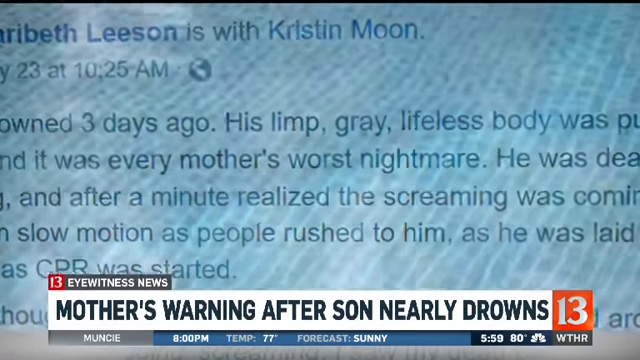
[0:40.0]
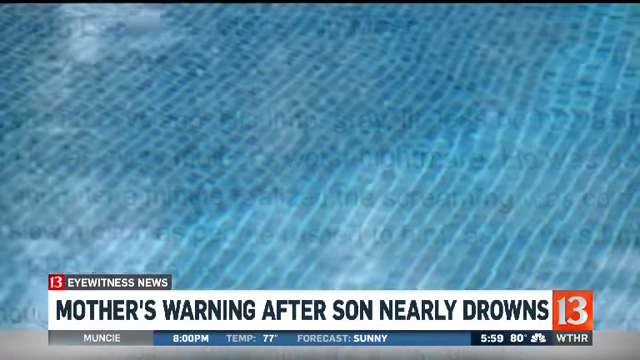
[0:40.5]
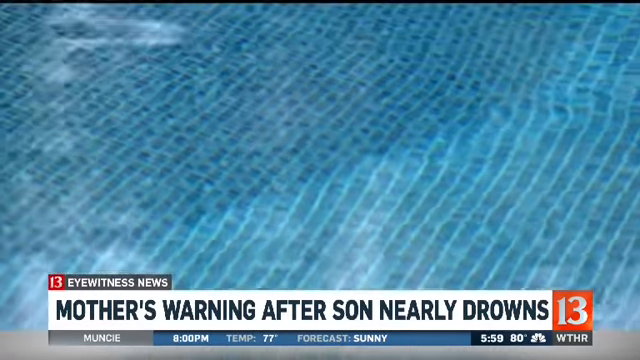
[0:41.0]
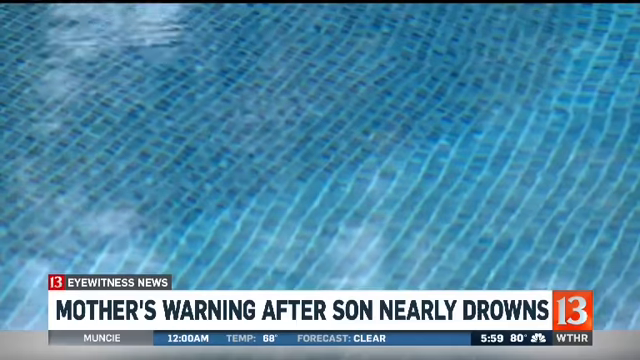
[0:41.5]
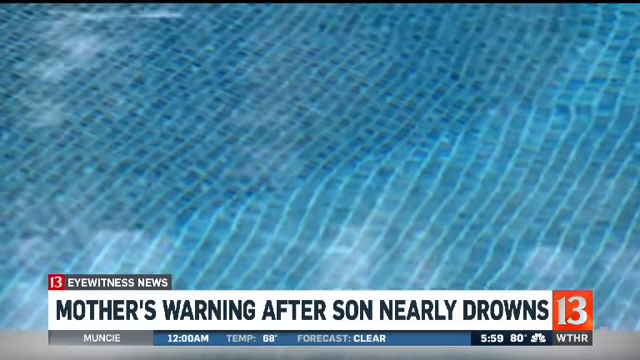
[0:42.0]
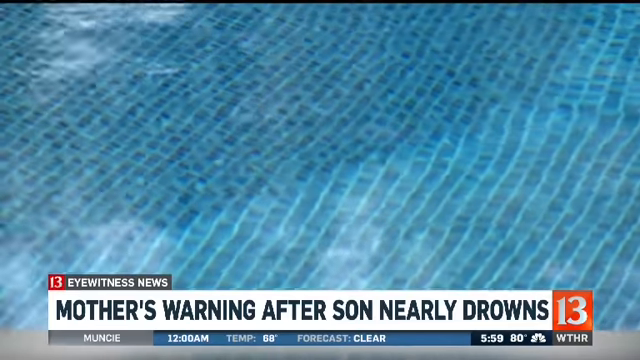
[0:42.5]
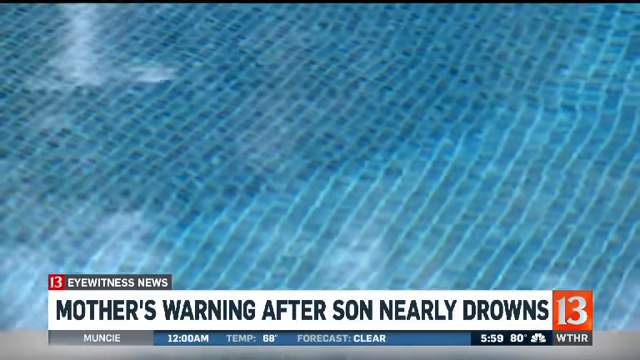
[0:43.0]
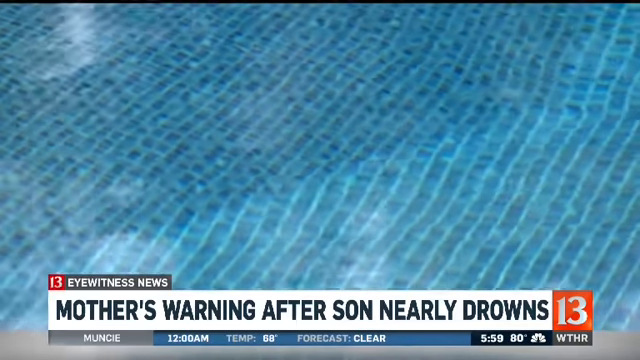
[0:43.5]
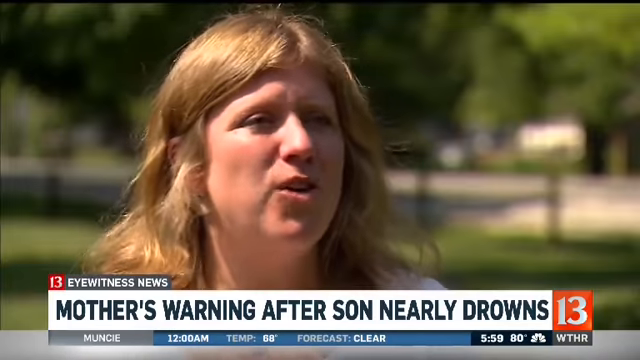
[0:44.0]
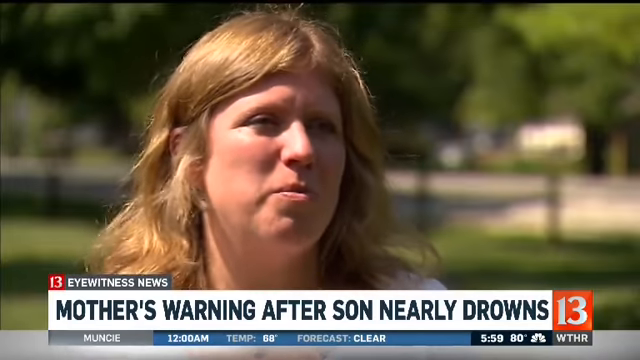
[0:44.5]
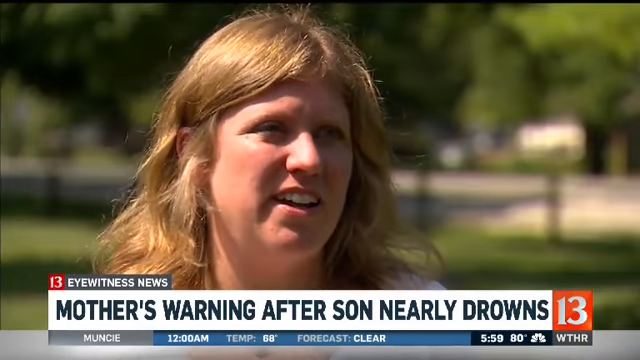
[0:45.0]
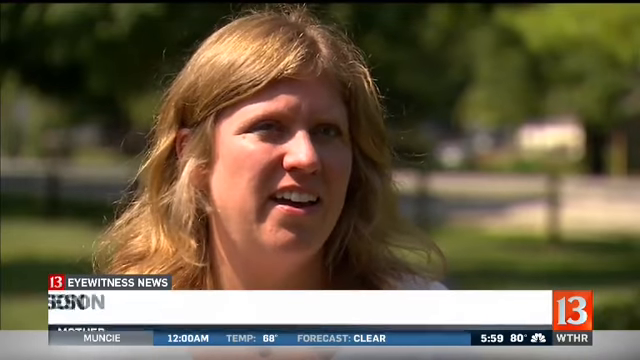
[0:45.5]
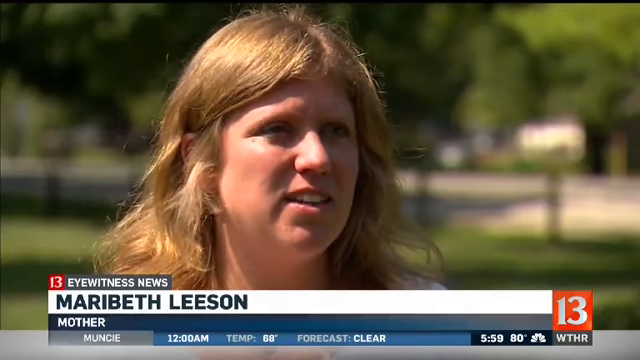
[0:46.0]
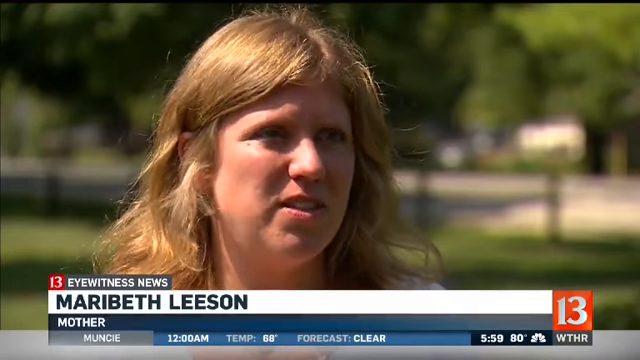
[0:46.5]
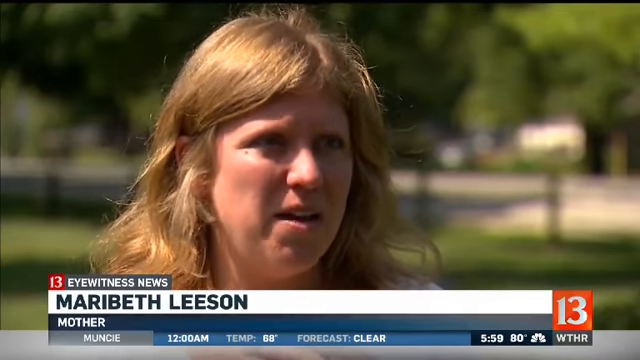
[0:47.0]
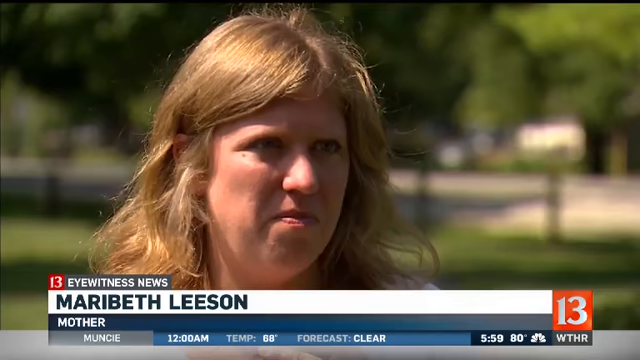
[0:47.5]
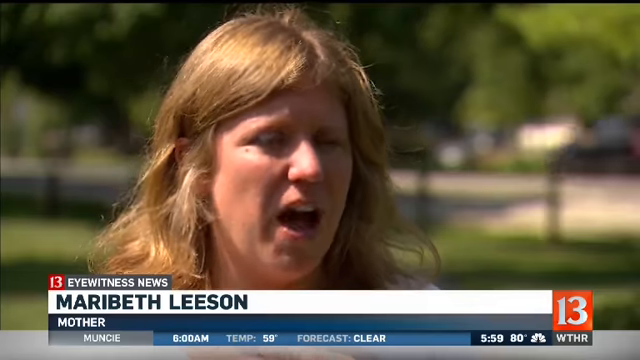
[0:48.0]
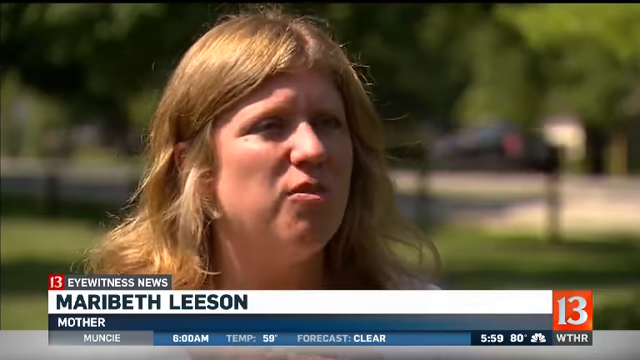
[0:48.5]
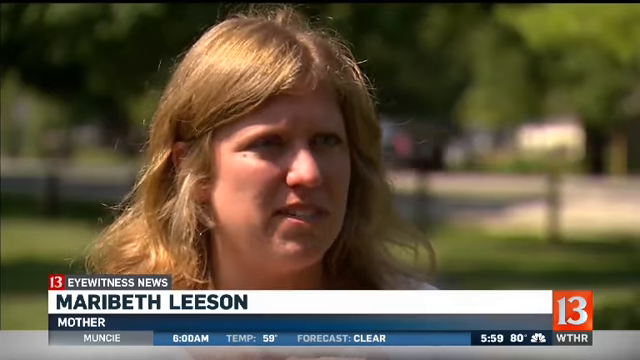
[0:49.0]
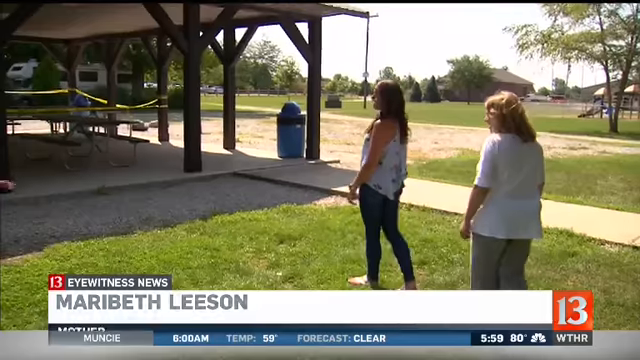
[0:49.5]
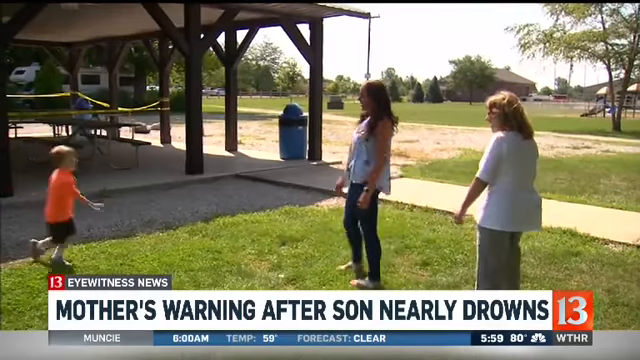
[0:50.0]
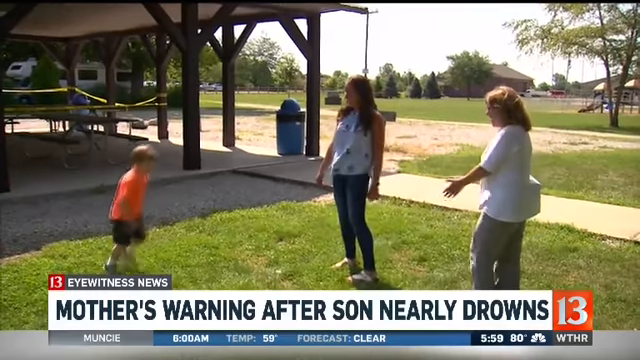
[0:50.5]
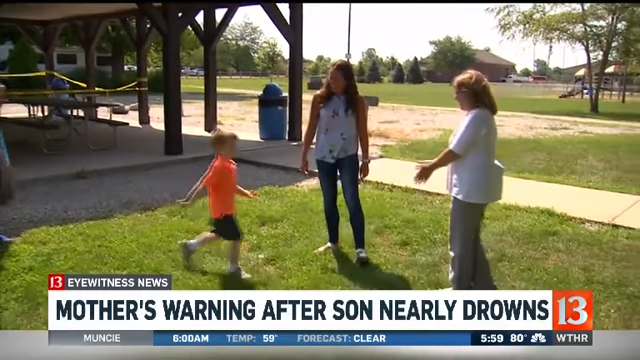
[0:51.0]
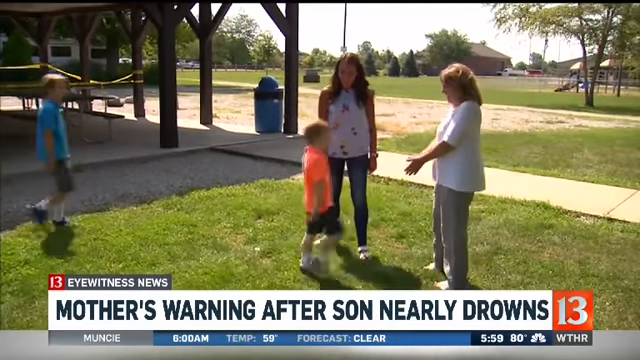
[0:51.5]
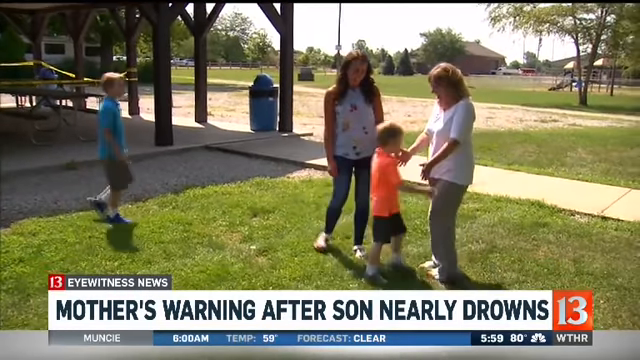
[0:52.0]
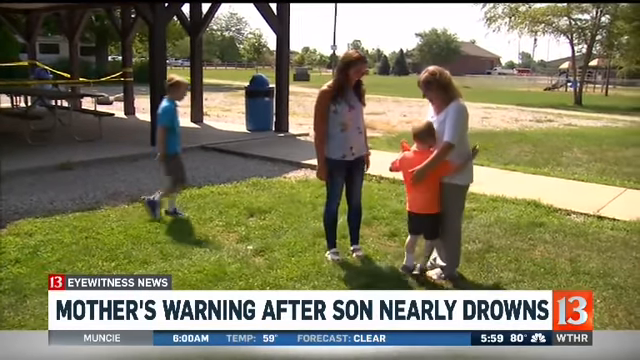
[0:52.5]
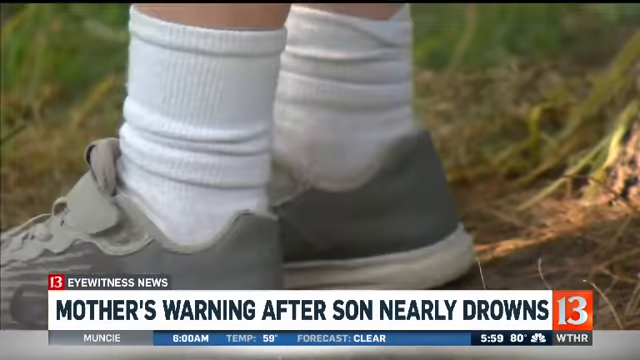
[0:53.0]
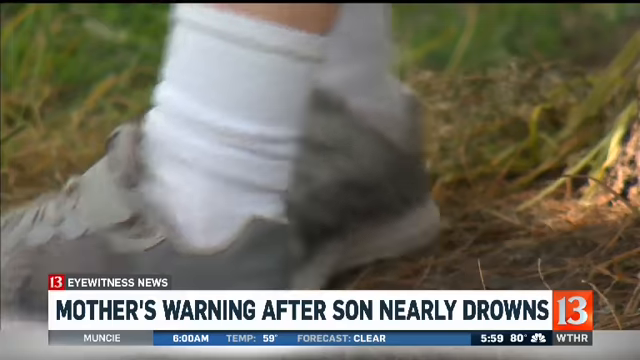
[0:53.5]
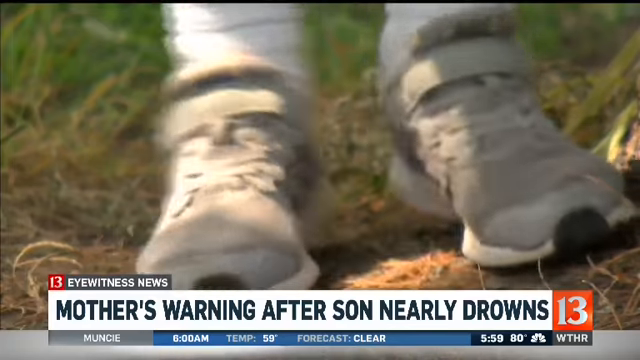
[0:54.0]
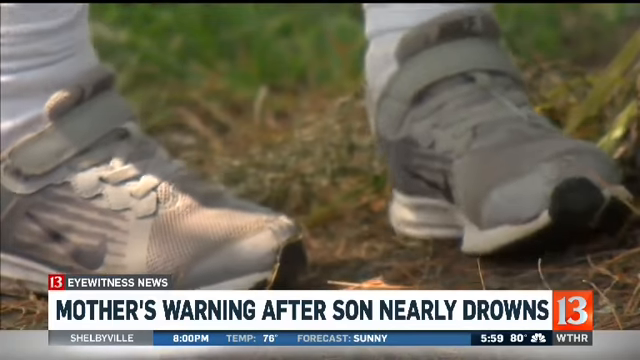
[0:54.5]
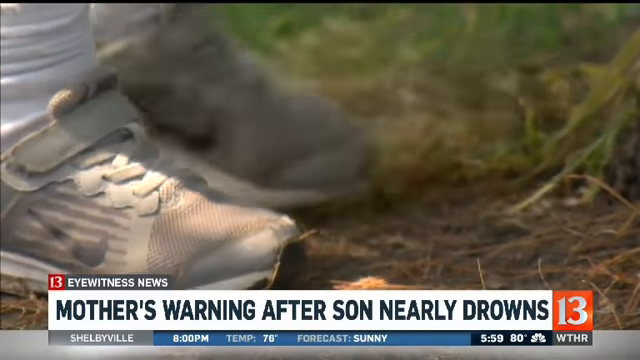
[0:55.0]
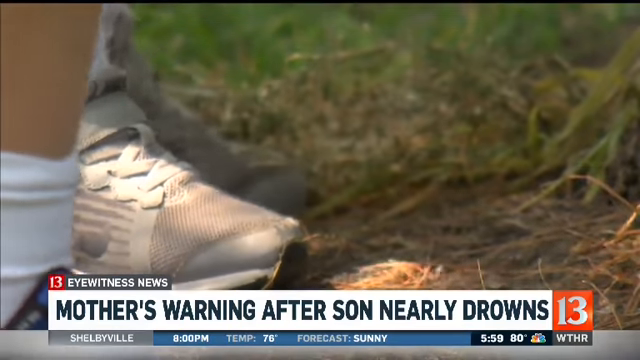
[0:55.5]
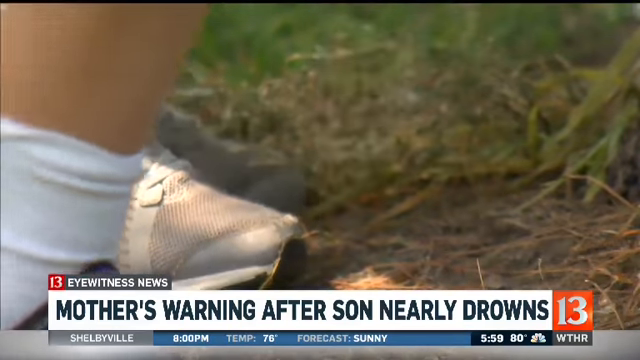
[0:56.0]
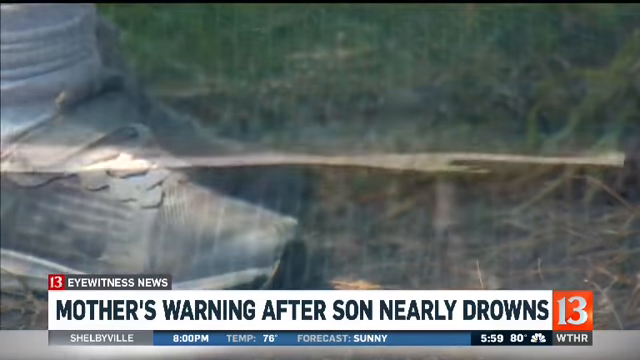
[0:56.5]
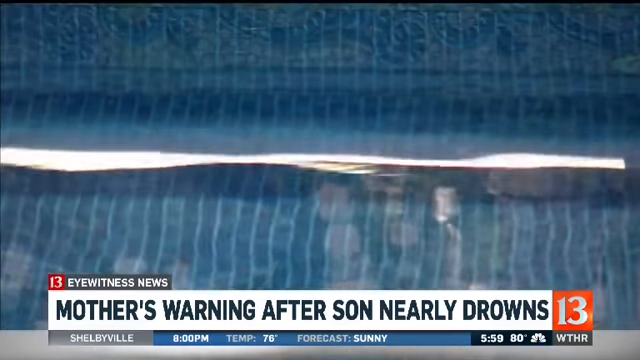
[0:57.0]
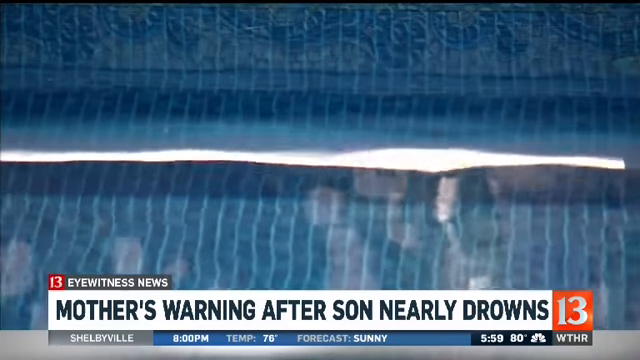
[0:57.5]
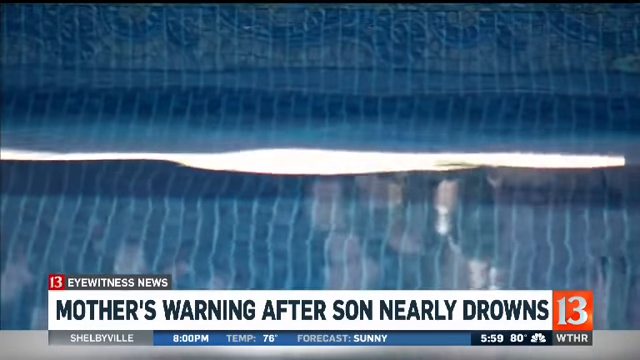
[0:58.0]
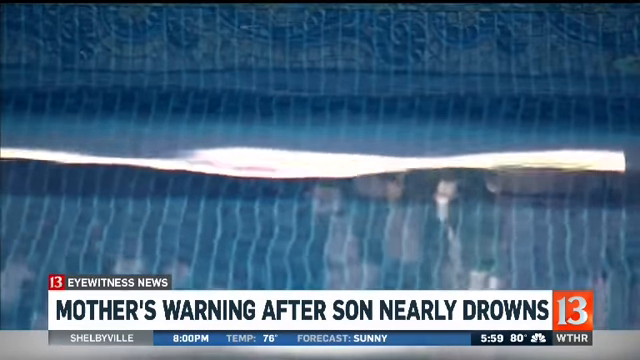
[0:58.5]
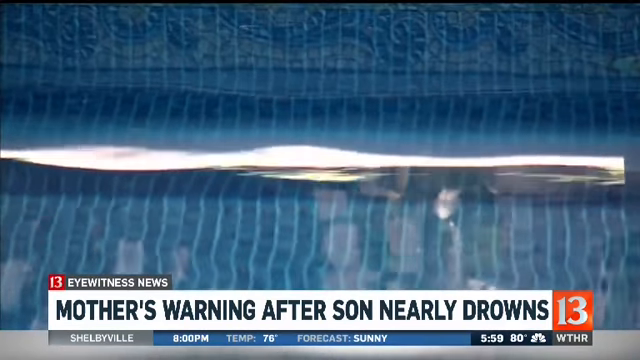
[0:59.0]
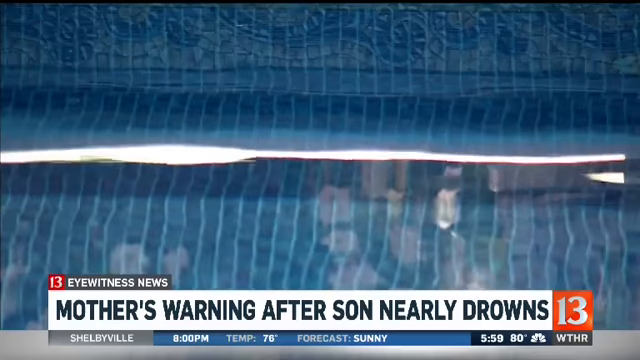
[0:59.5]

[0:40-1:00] Mary Beth writes a post saying her son drowned three days ago, describing his limp gray lifeless body, every mother's worst nightmare, her screaming, seeing it in slow motion, the boy lying there, and CPR being started. On-screen text reads "channel 13 eyewitness news mother's warning after son nearly drowns." Then pool water and its reflection appear, followed by the mother on screen. She has sort of blonde hair and wears a white top, with a lot of trees in the background. Text identifies her as Mary Beth Leson (L-E-S-O-N), a mother. A little boy appears wearing gray shoes and white socks. Then the pool water is shown again.